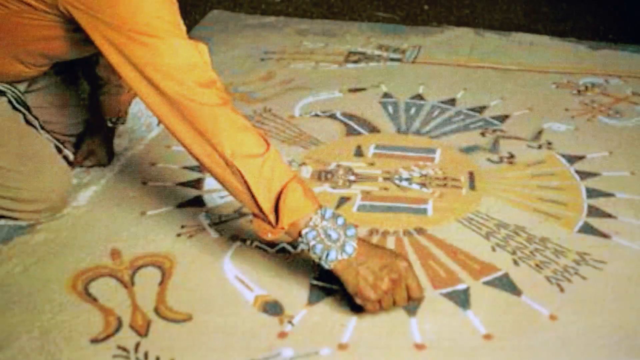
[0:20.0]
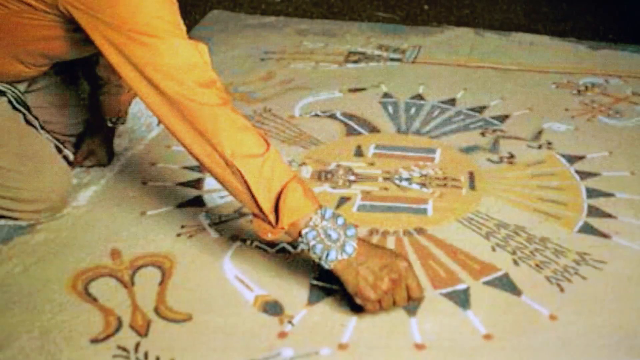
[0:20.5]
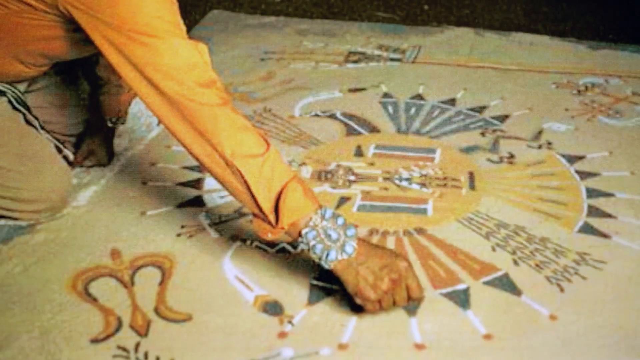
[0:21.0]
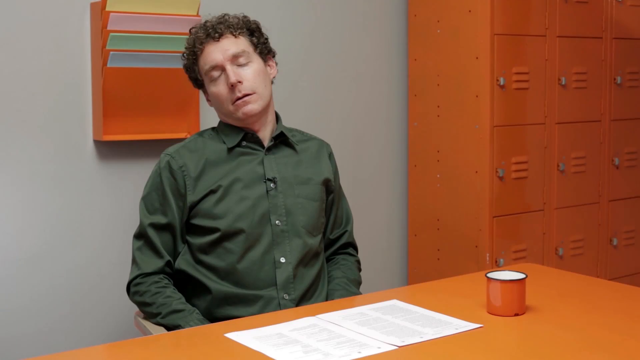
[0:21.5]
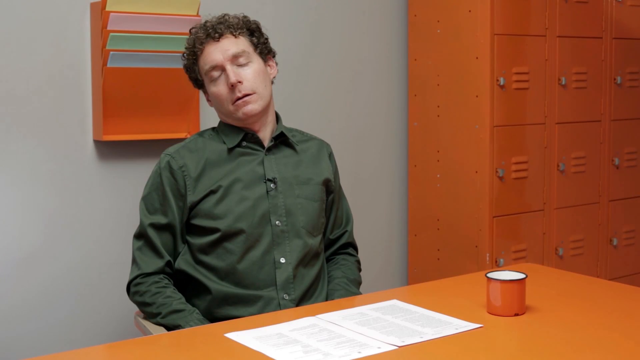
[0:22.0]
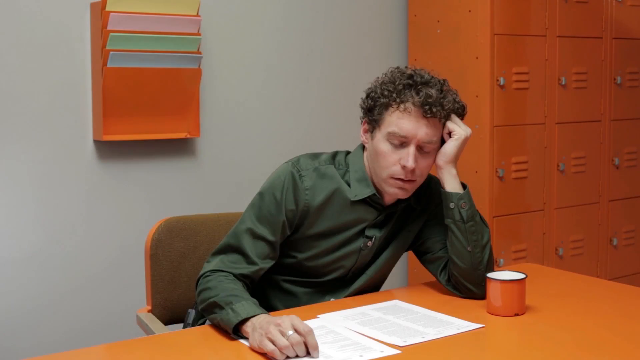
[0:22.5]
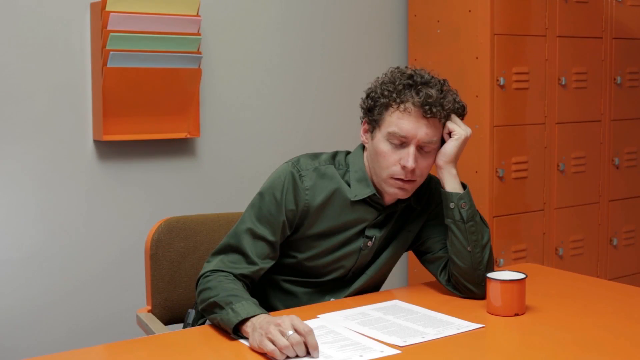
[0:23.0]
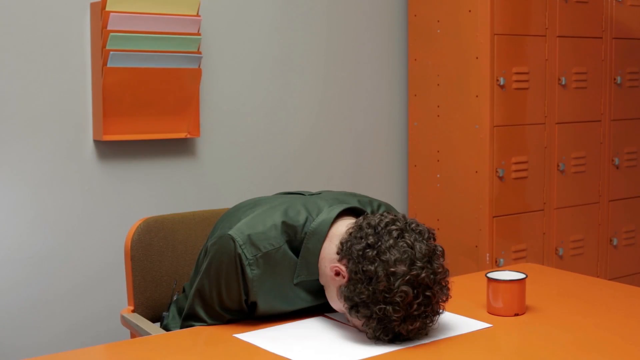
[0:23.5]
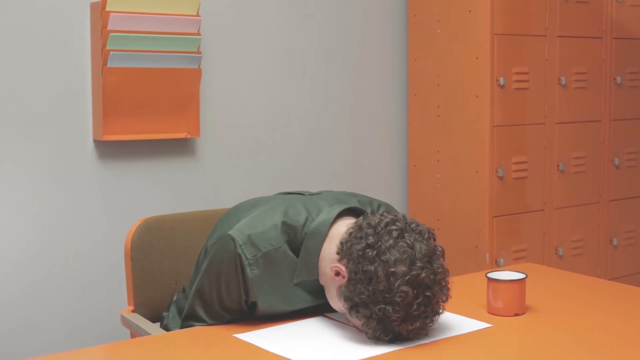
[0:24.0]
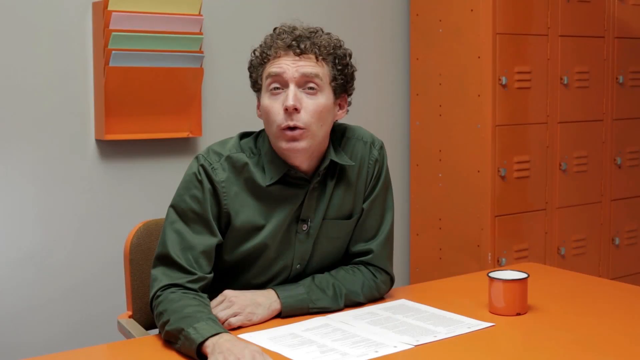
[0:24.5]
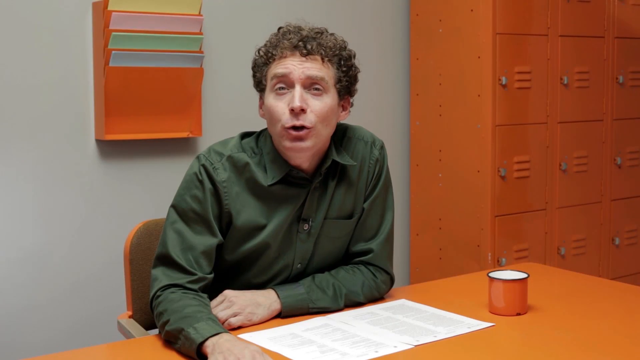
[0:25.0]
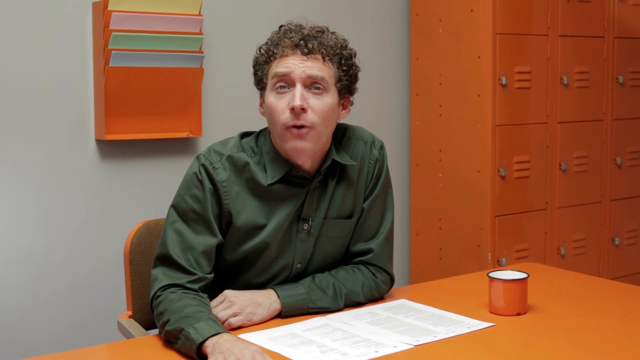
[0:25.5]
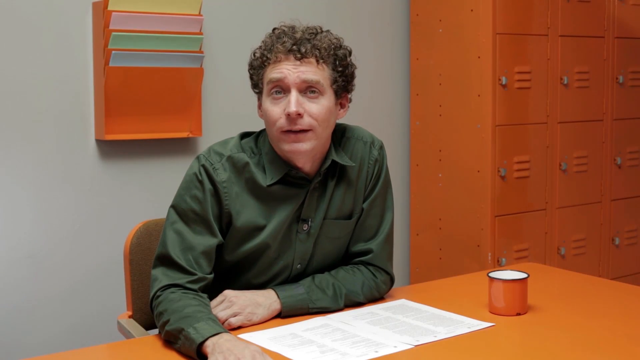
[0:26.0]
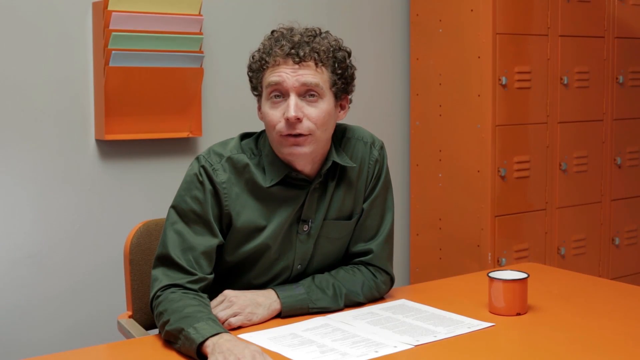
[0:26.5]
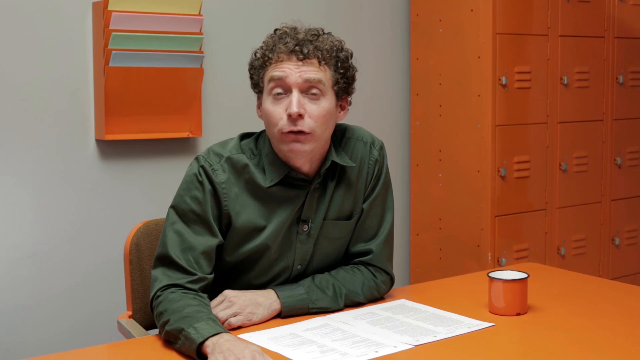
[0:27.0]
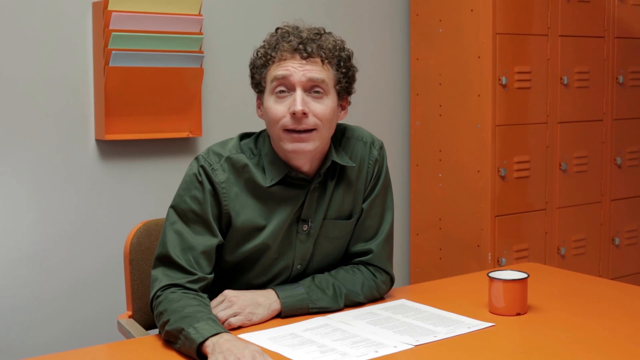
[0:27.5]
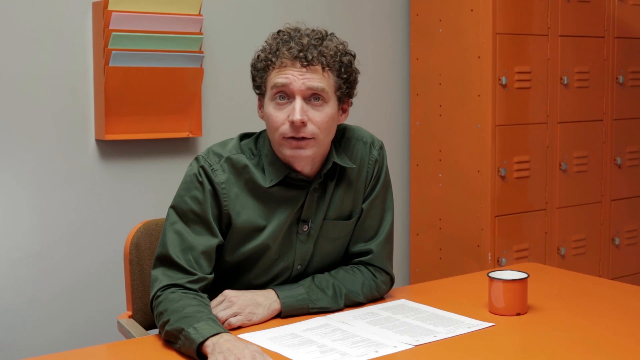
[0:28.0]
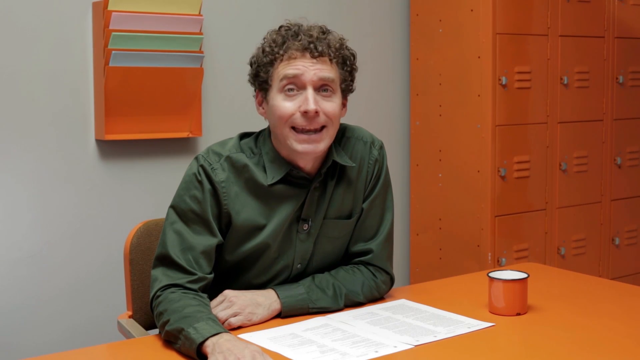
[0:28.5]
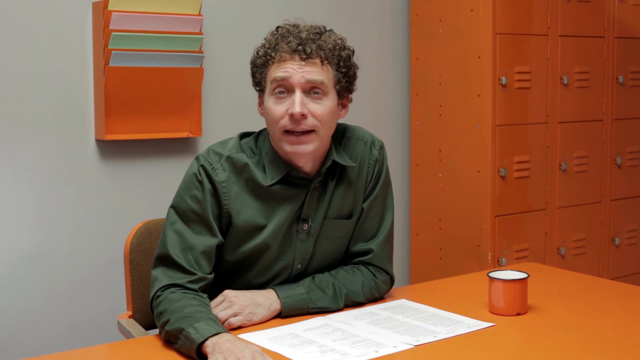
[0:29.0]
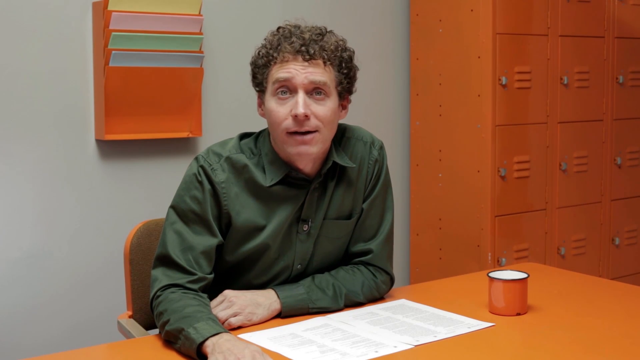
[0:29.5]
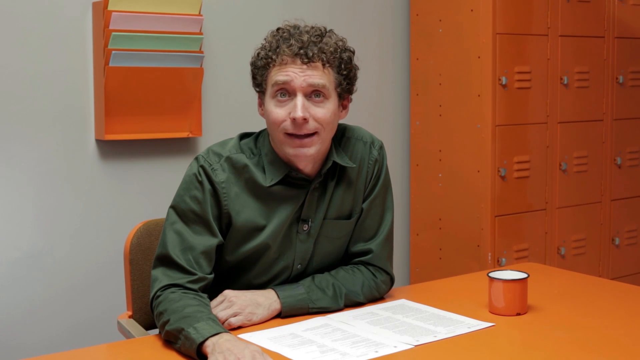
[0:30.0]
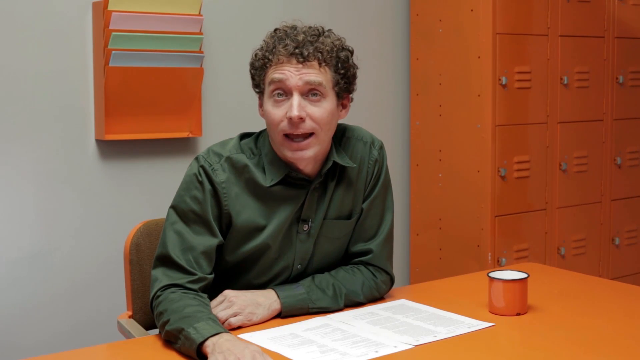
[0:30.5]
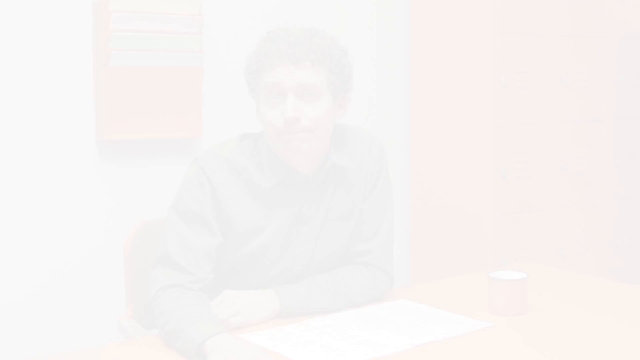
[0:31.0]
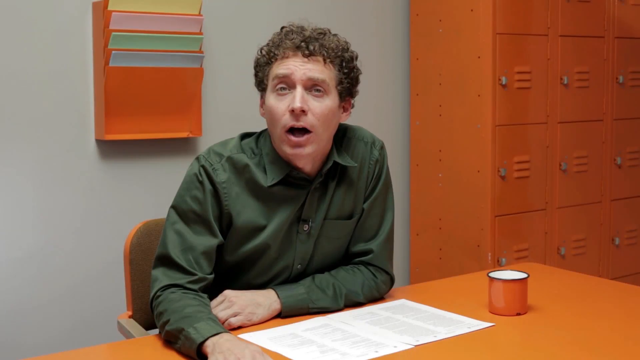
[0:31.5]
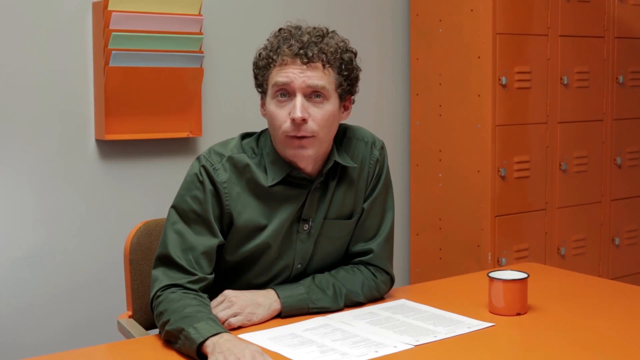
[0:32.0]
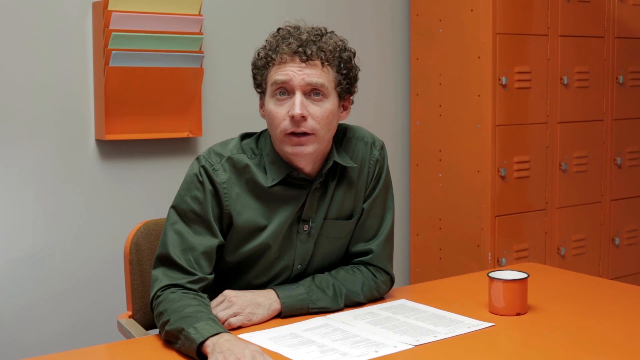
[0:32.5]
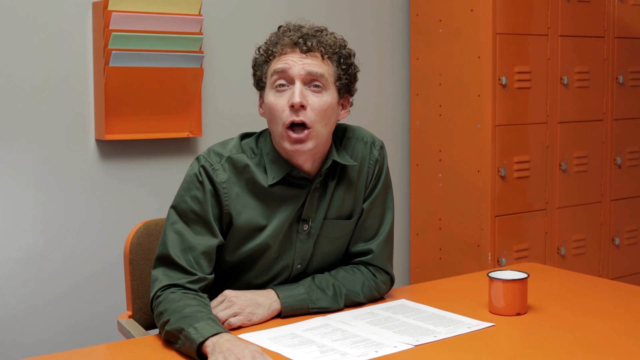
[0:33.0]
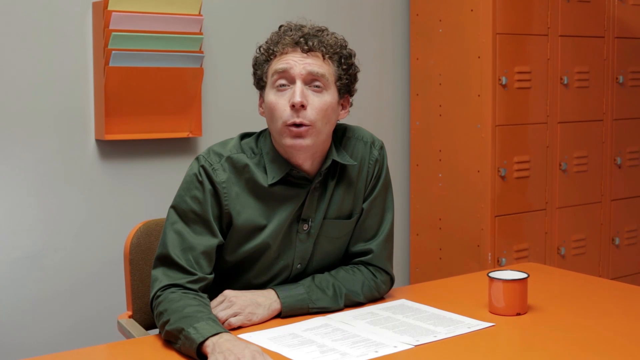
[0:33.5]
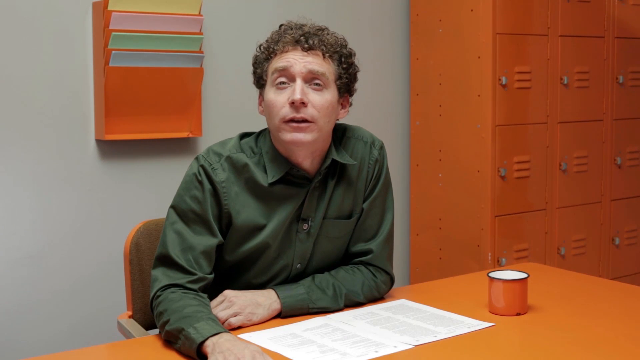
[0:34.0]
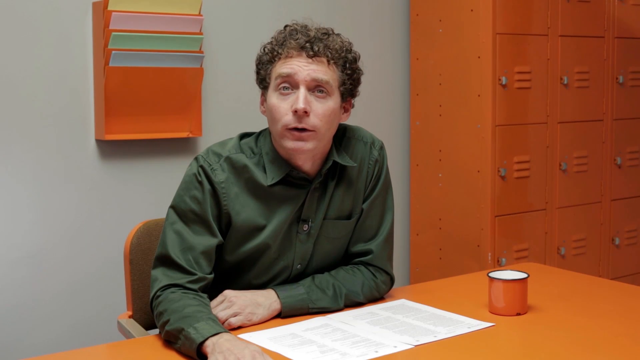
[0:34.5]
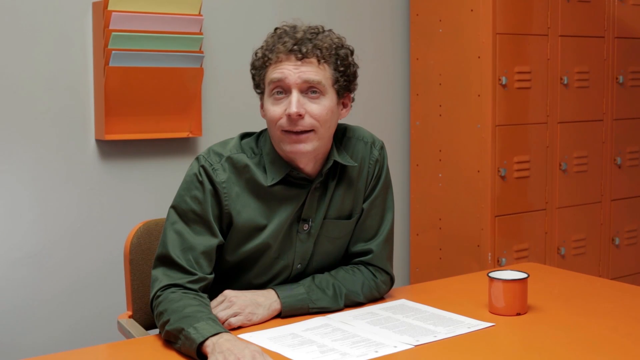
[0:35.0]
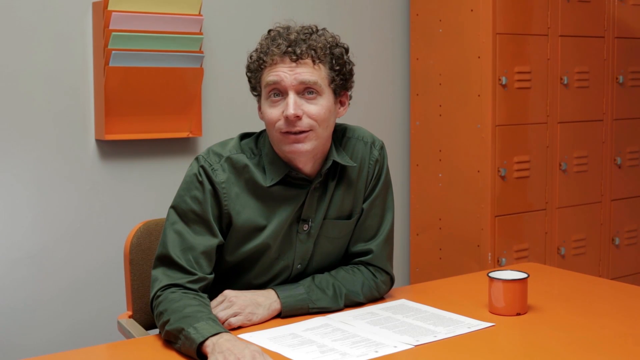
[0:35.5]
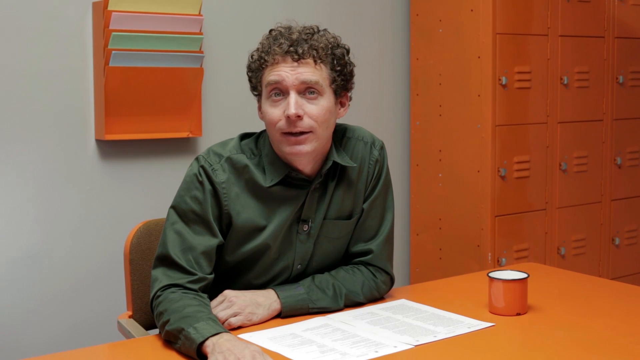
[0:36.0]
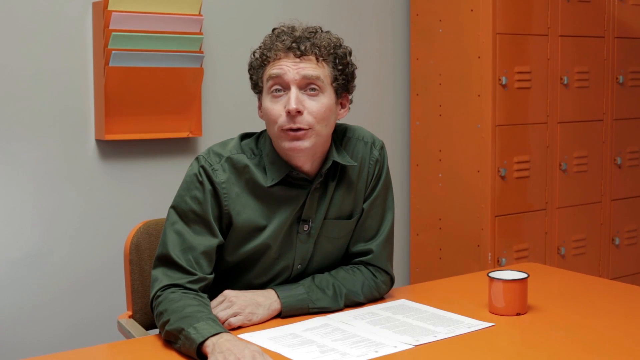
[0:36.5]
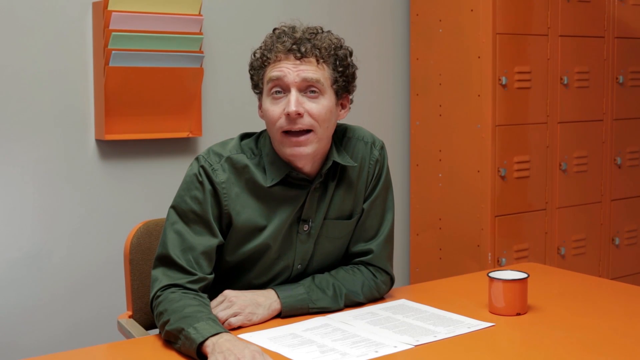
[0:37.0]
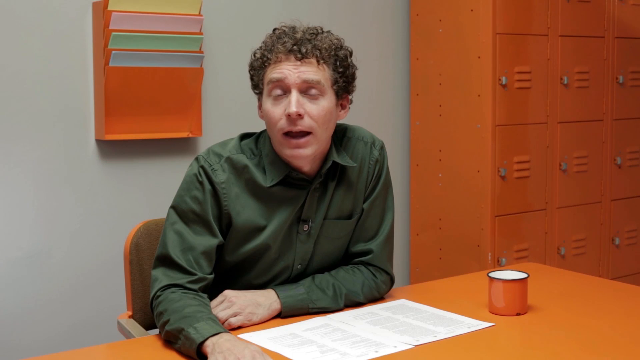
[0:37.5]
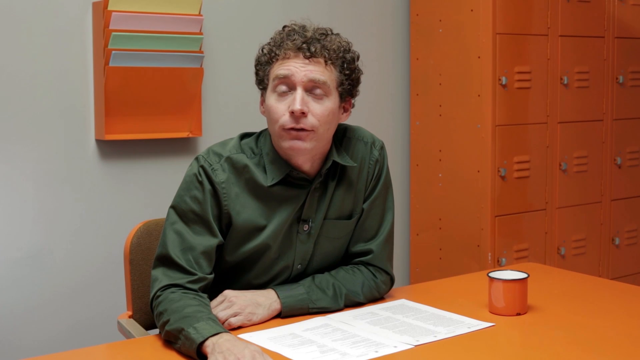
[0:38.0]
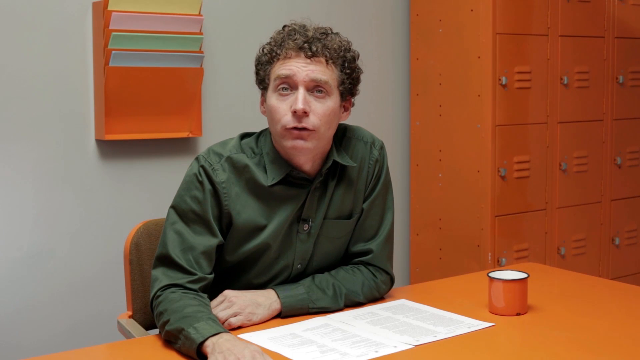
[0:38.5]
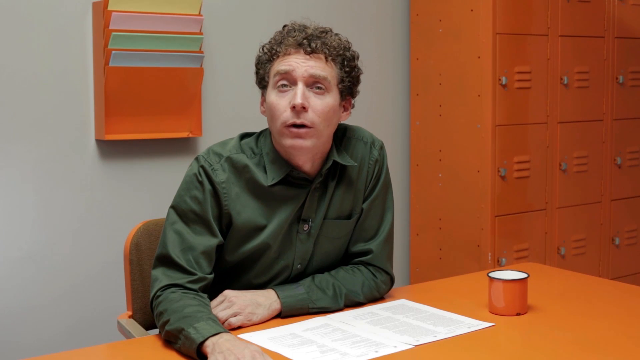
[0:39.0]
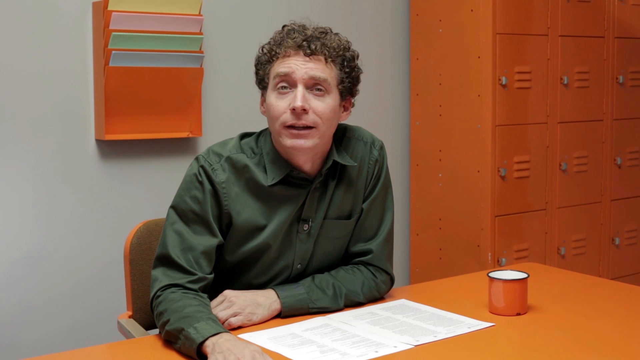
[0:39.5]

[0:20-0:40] A still image shows what looks like a tribal First Nations man kneeling on the ground. Only his arm, extended over the top of the poster, and his knees are visible. He wears a long-sleeve orange shirt, brown pants, and a bracelet with various jewels on his wrist. The poster is parchment style, with various symbols and a circular diagram in the middle. The scene switches to a man sitting at a desk in a room with white walls. Behind him, an orange file folder is mounted to the wall with different colored sheets of paper in it. On the right is an orange locker storage unit with twelve lockers visible. On the table there is an orange mug and two sheets of paper. The man is white, has short curly hair, and wears a green long-sleeve button-up collared shirt. He leans back against the chair and looks like he is asleep. The image quickly shifts to the same man leaning on the desk with his hand on his head, also resting his eyes, and then to him with his head laying on the desk on top of the paper. It then switches to him sitting in a relaxed pose with his arms resting on the desk, talking to the screen. There is a brief flash, and he continues to talk.